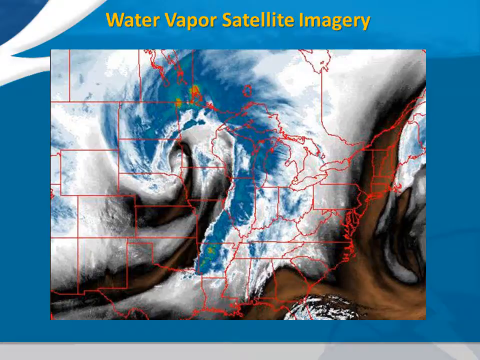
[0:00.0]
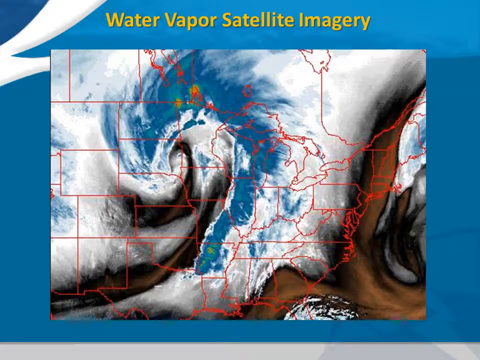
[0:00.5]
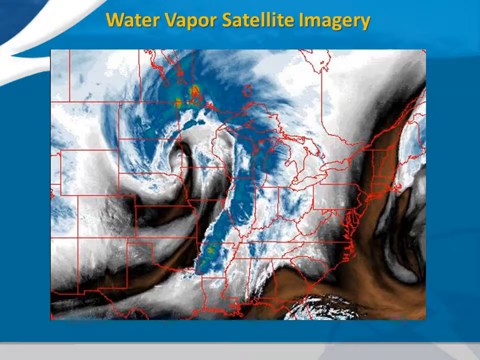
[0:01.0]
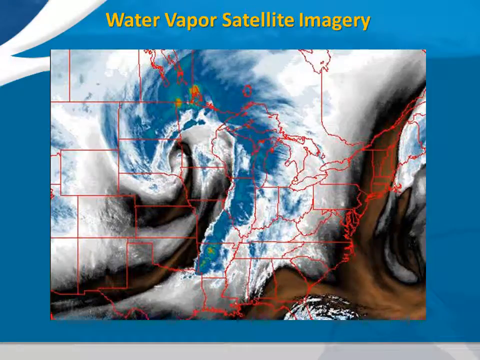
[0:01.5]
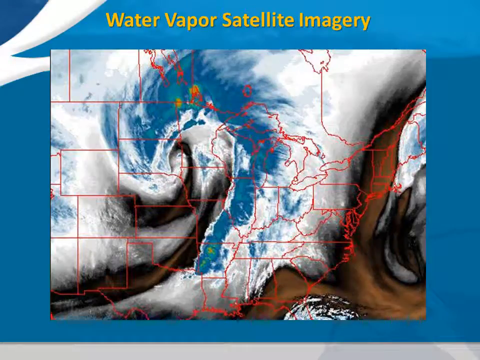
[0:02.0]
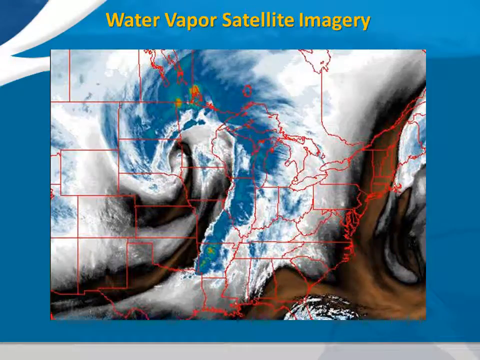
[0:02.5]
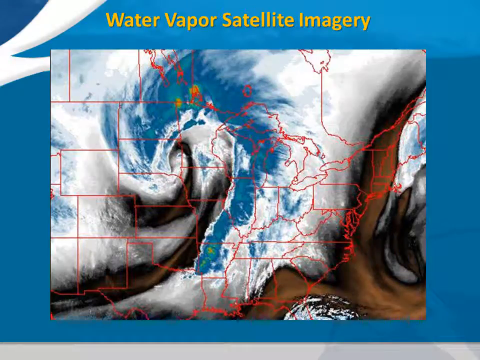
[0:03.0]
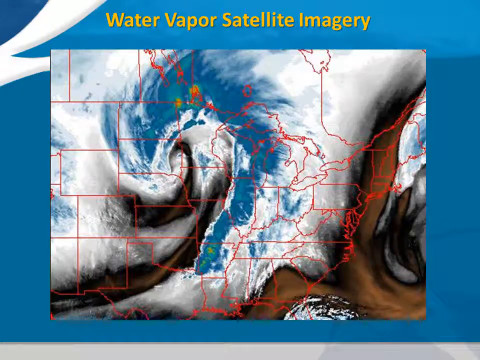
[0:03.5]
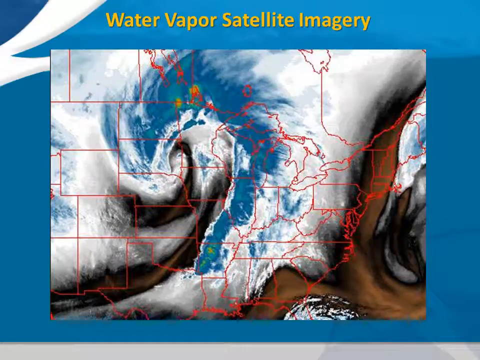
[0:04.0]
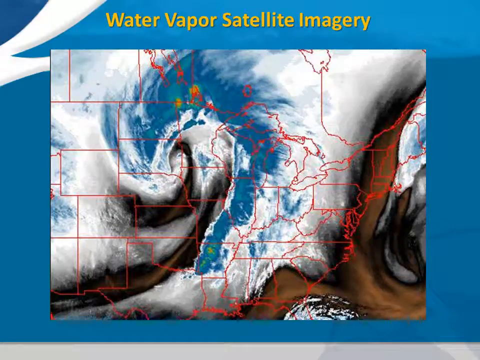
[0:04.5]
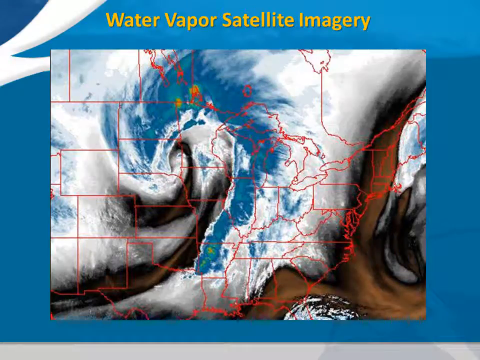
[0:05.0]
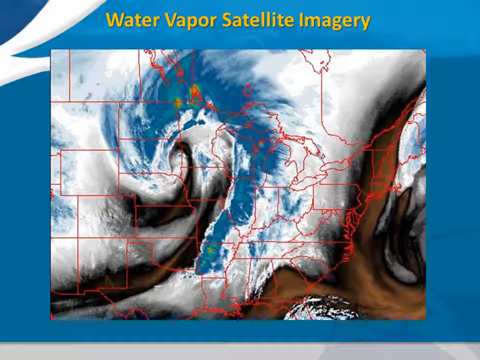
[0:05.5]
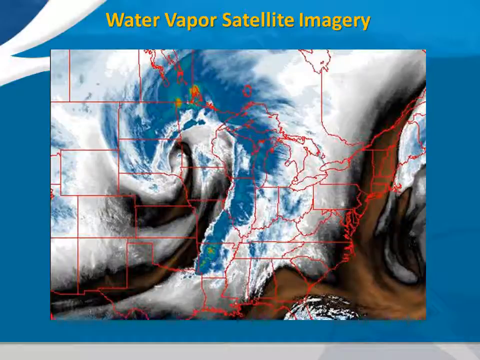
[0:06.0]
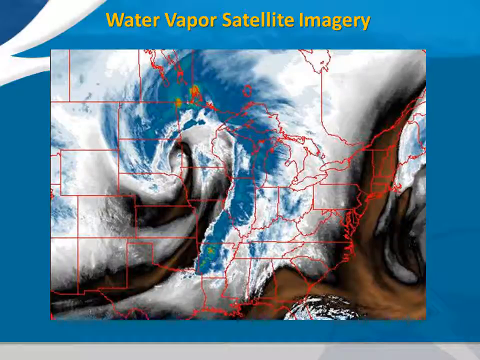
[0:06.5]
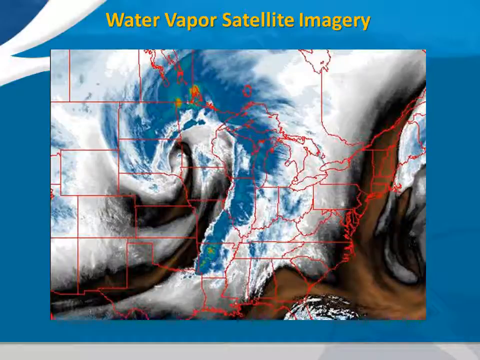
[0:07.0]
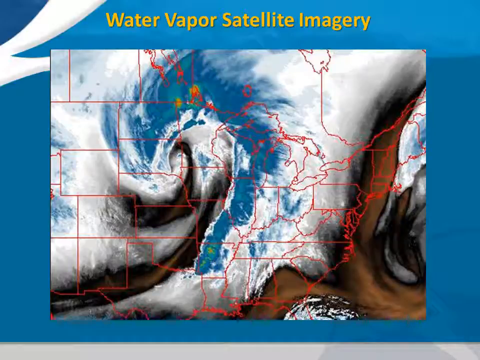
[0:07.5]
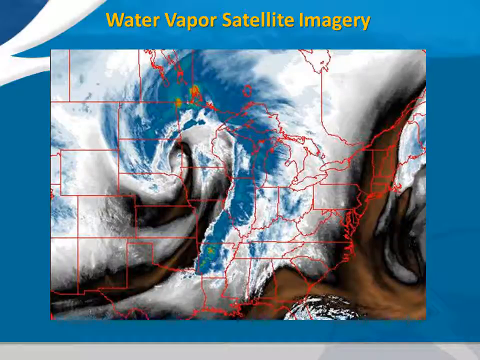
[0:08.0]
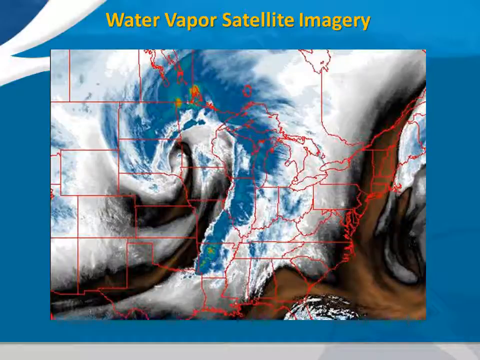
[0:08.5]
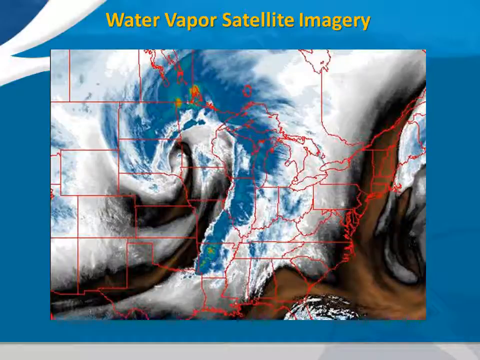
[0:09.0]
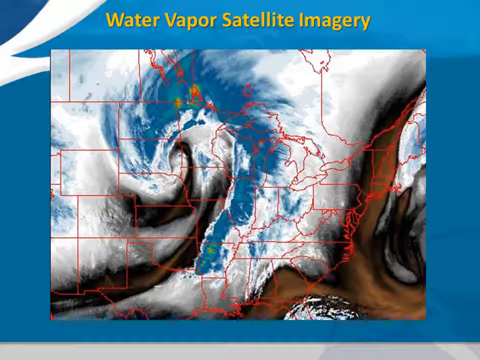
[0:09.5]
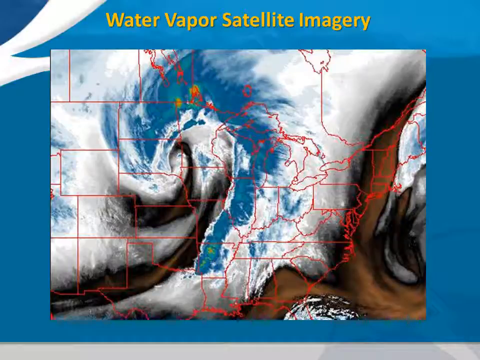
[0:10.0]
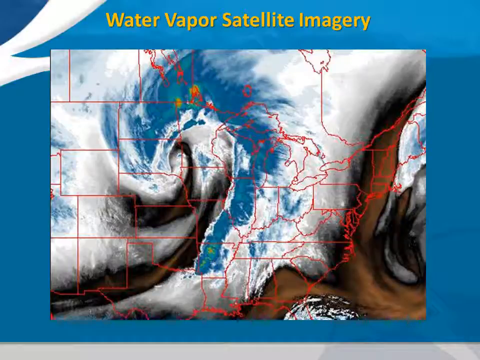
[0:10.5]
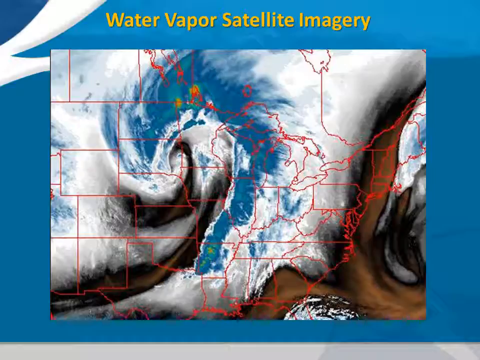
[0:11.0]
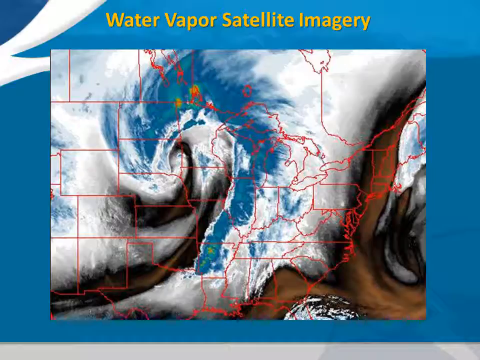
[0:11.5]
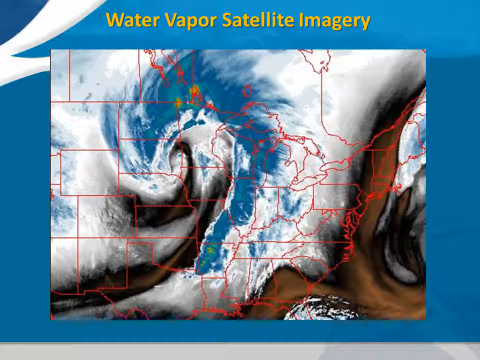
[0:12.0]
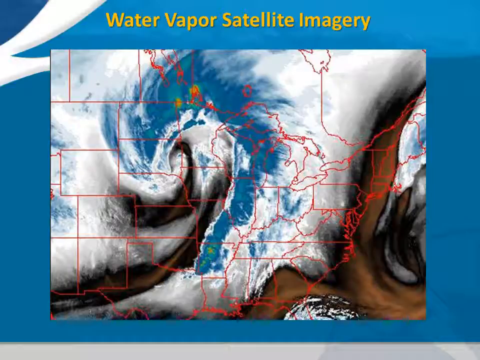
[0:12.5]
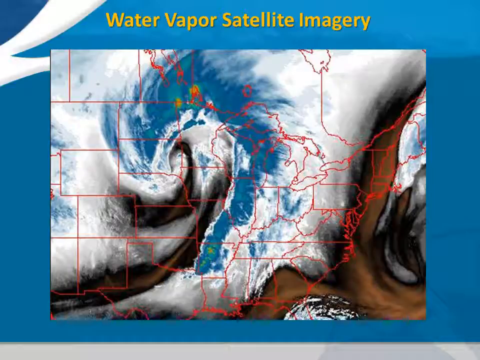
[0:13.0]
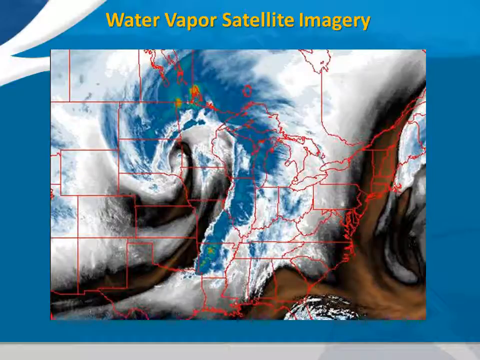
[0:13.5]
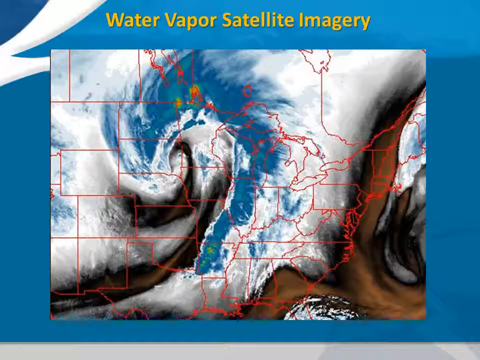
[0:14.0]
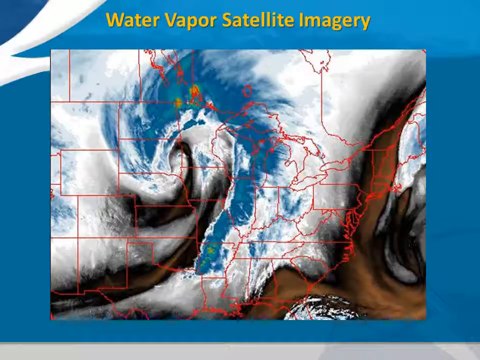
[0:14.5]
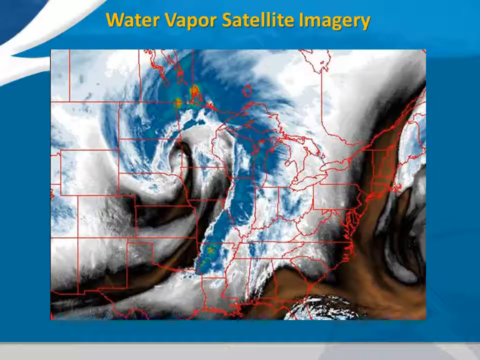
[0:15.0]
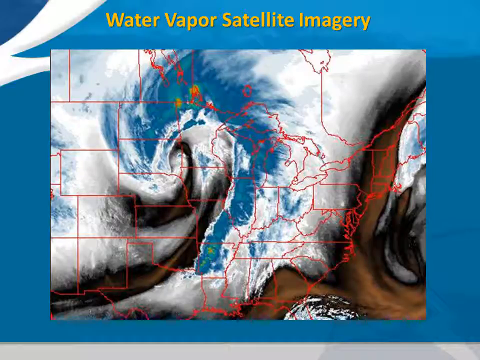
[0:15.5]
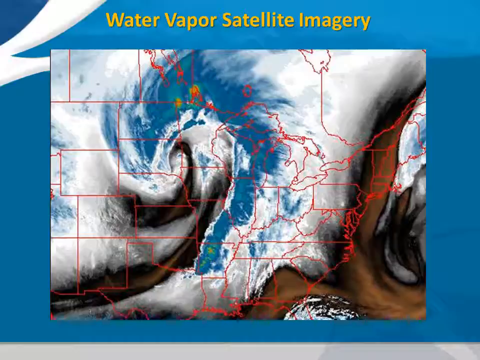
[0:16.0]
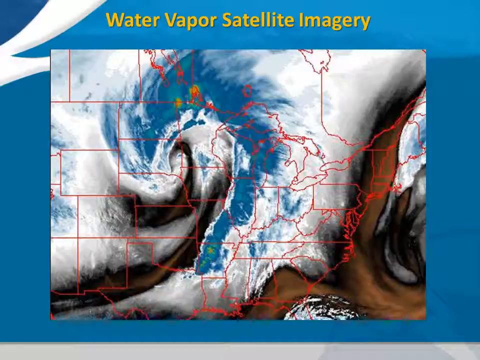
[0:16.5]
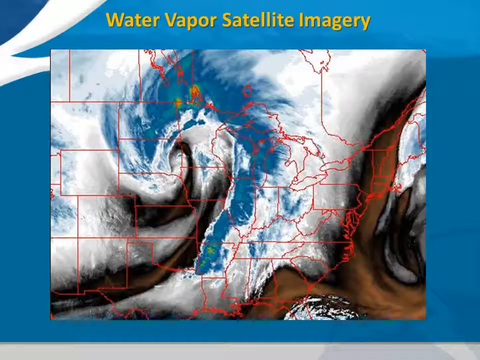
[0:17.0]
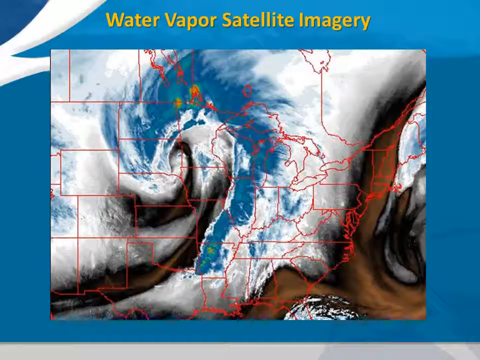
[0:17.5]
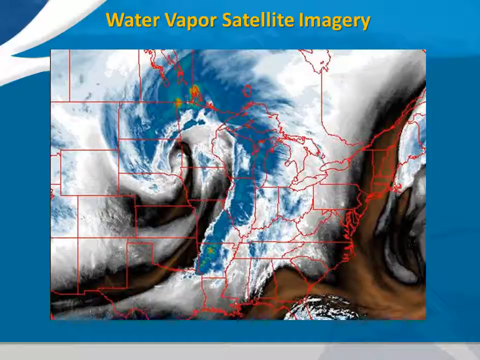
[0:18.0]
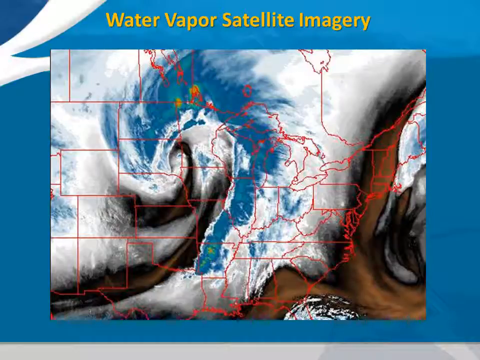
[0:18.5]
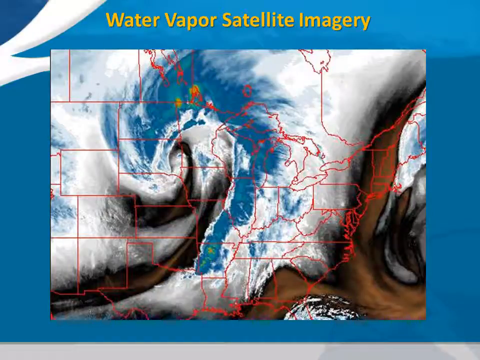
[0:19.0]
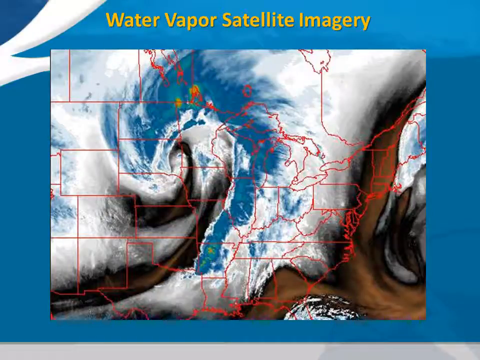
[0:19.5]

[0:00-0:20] At the top of the screen, yellow text reads "Water vapor satellite imagery." Below it is an image of what is perhaps the surface of the Earth, framed by a blue border, with an overlay of the states of the United States on the map. It shows what appear to be either clouds or water in the air. The clouds are white, with blue, green, and some reds and yellows within them, probably depicting moisture. At the bottom right is some kind of brown-looking swirly material, possibly dust or smoke, though what it represents is unclear. Later, yellow arrows appear over the overlay: some pointing east, one pointing west, and one pointing southeast.